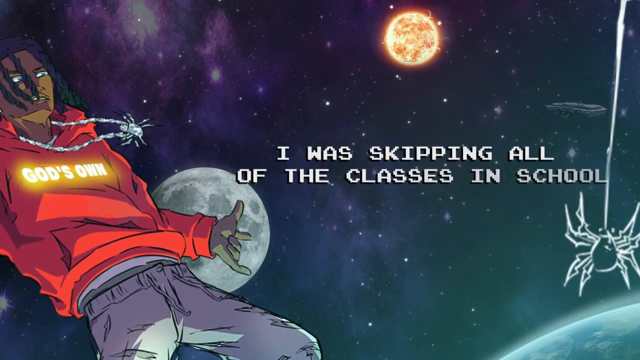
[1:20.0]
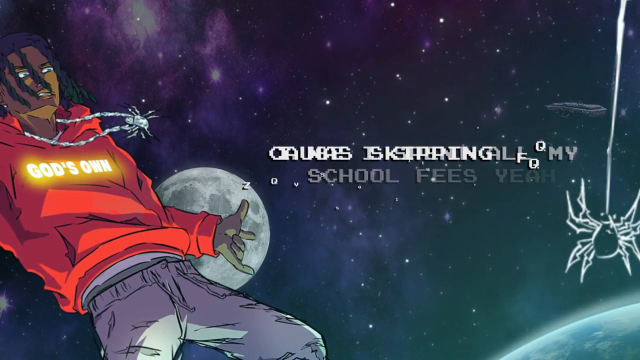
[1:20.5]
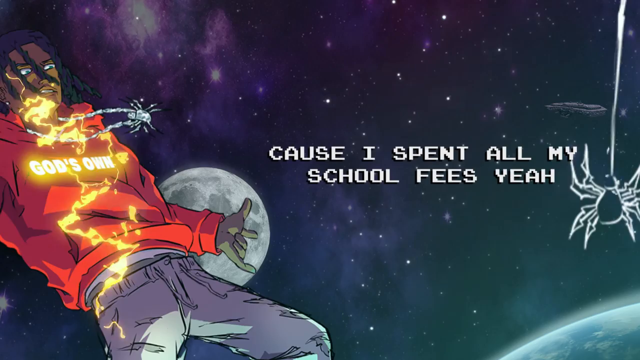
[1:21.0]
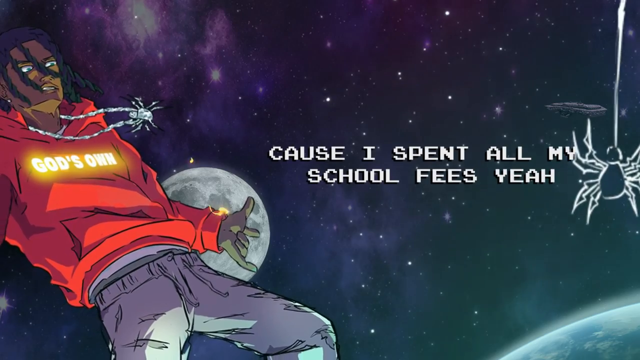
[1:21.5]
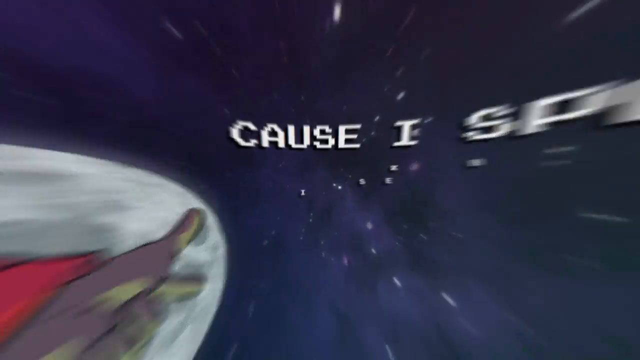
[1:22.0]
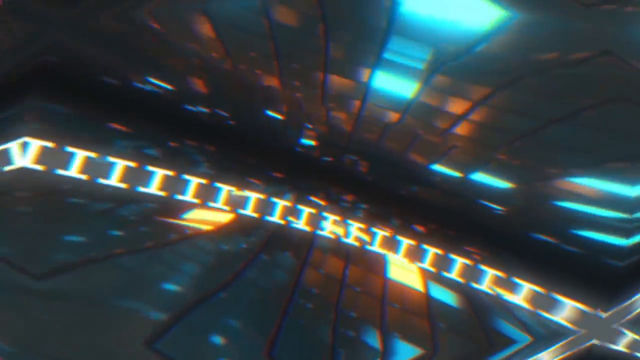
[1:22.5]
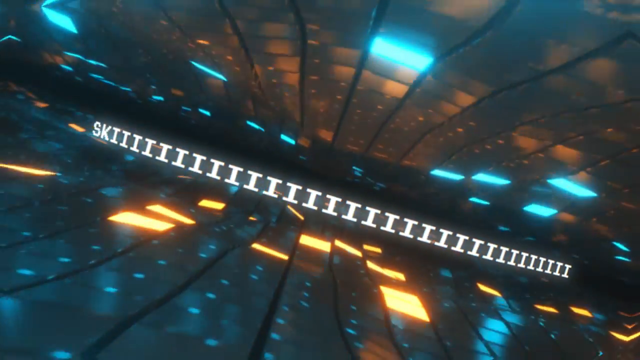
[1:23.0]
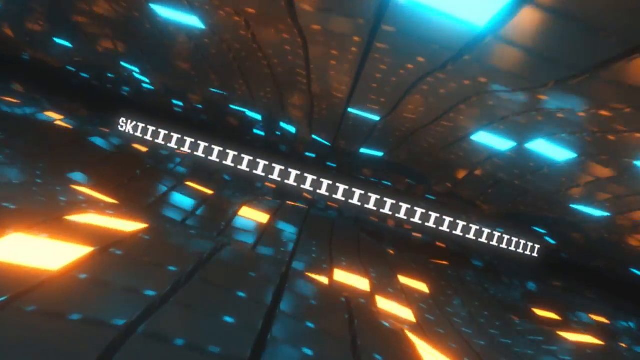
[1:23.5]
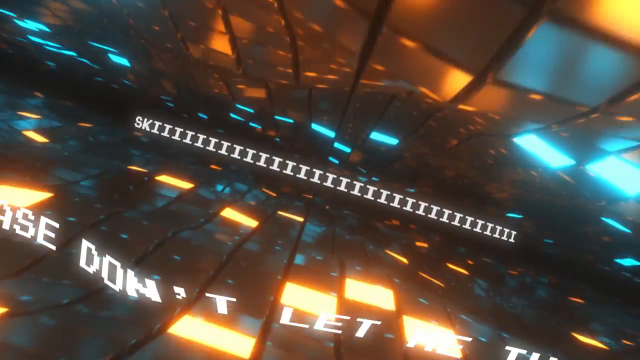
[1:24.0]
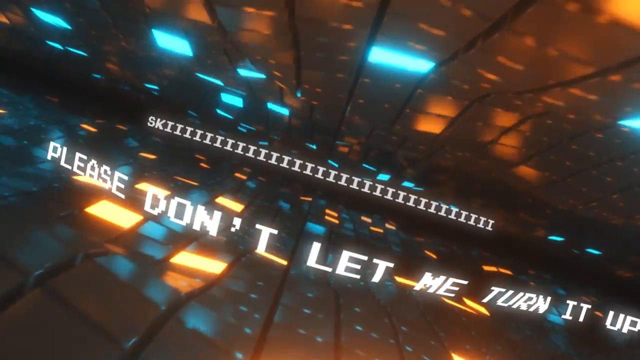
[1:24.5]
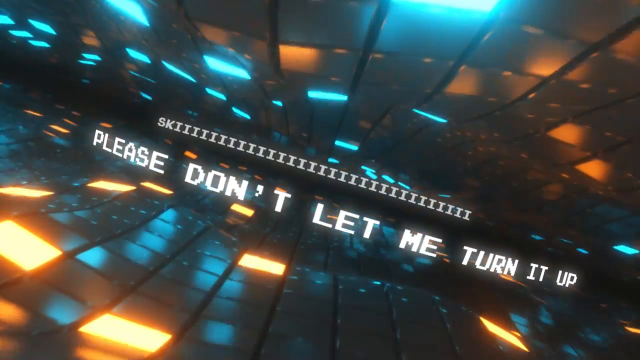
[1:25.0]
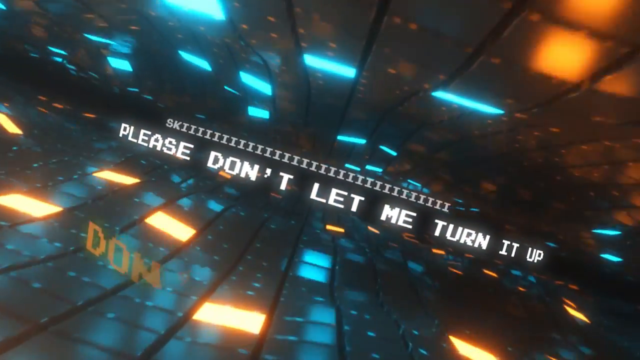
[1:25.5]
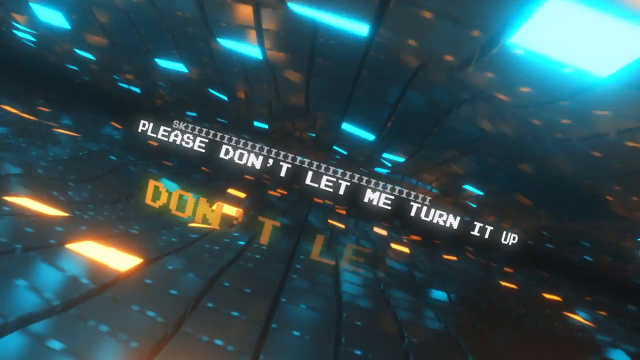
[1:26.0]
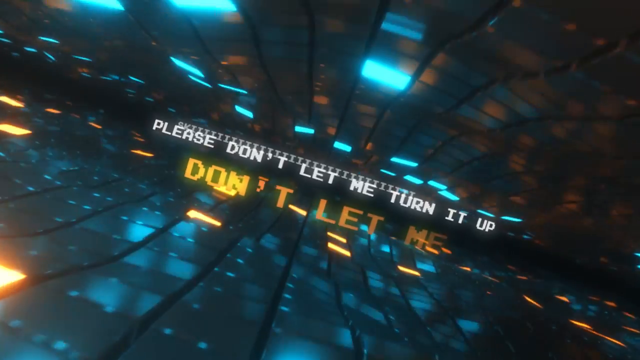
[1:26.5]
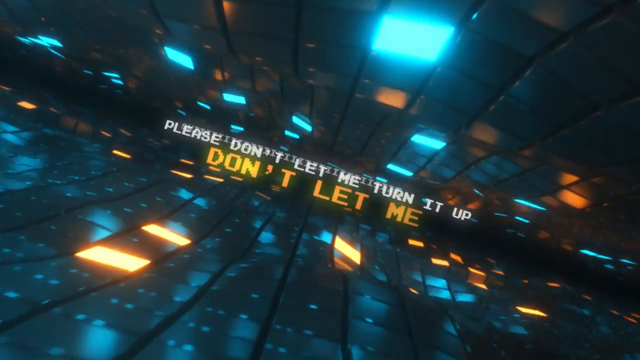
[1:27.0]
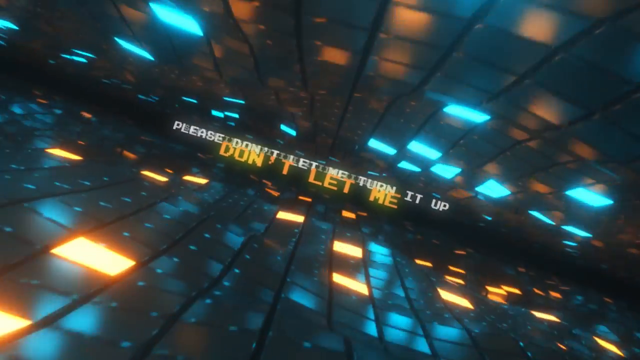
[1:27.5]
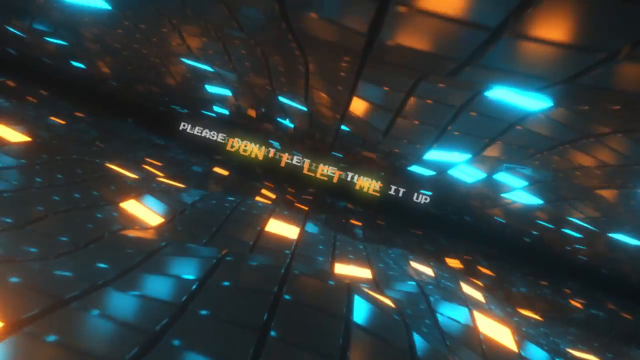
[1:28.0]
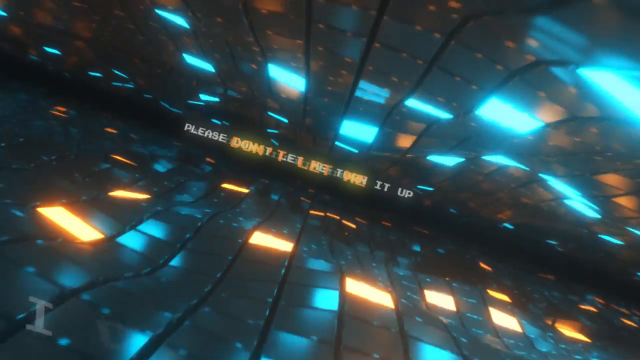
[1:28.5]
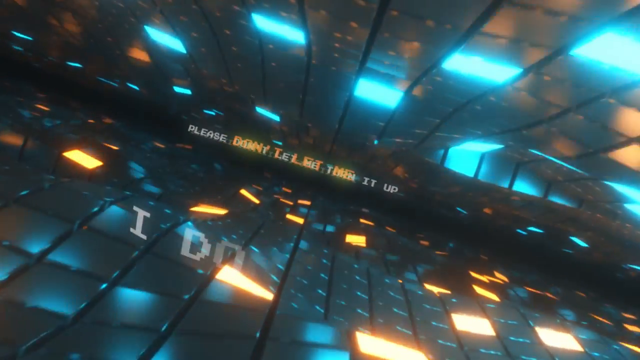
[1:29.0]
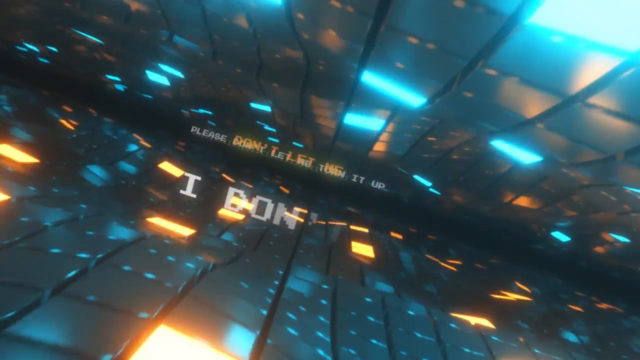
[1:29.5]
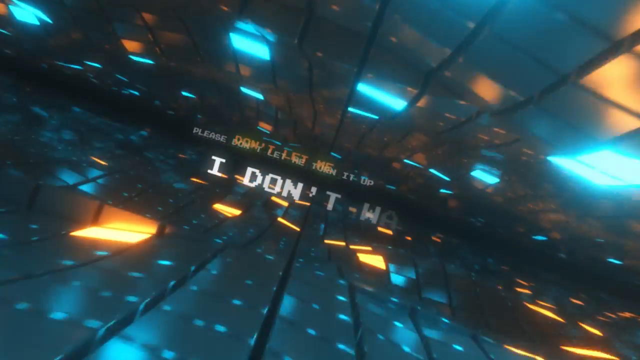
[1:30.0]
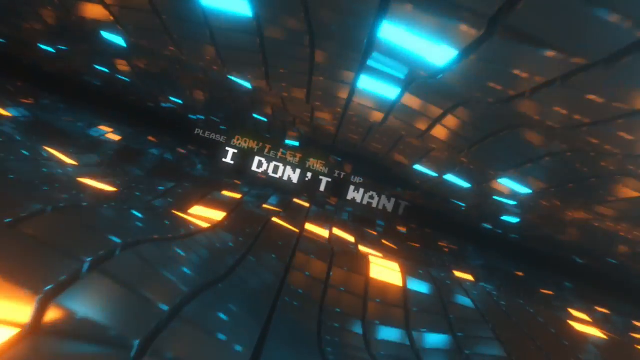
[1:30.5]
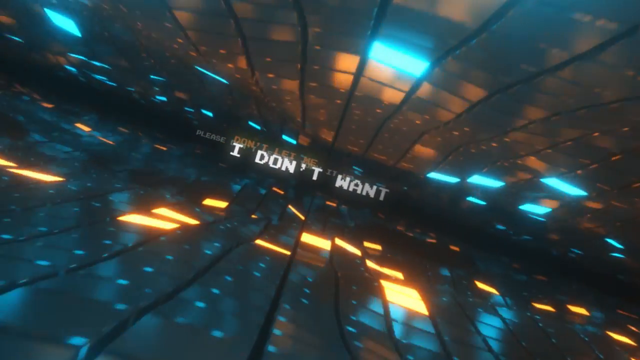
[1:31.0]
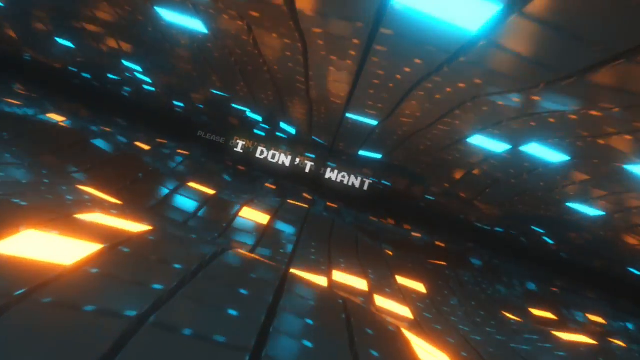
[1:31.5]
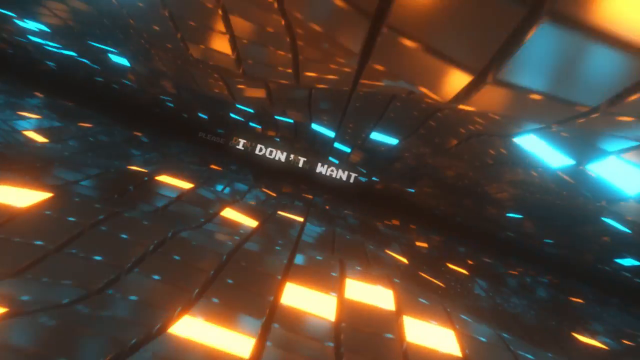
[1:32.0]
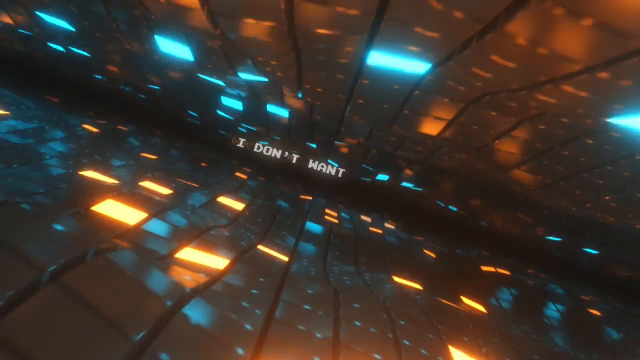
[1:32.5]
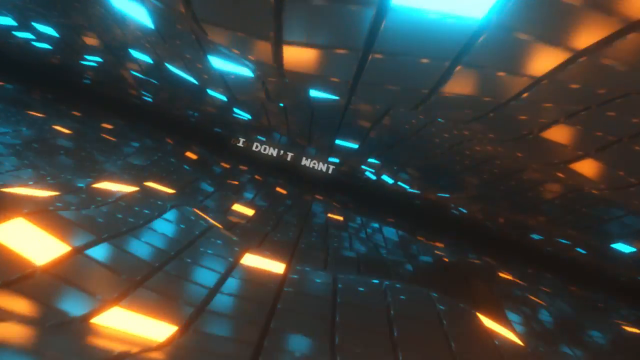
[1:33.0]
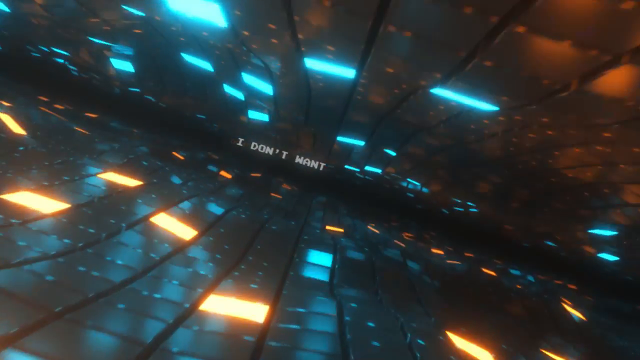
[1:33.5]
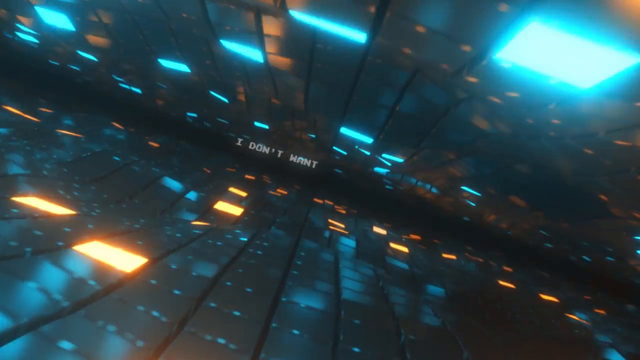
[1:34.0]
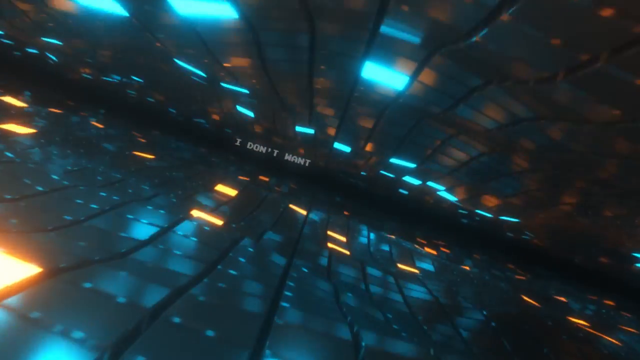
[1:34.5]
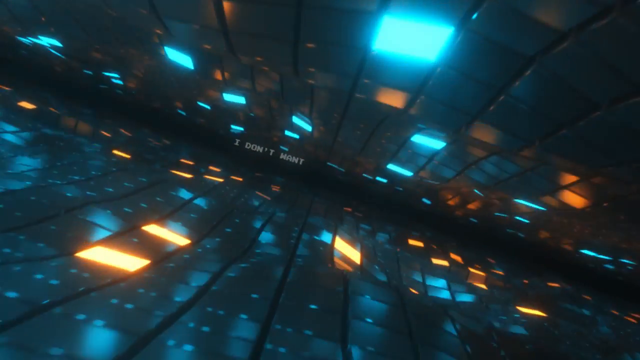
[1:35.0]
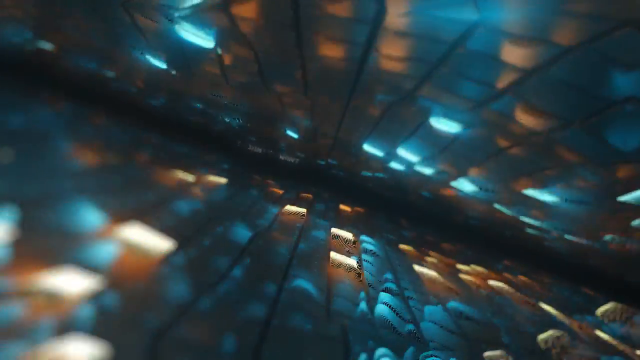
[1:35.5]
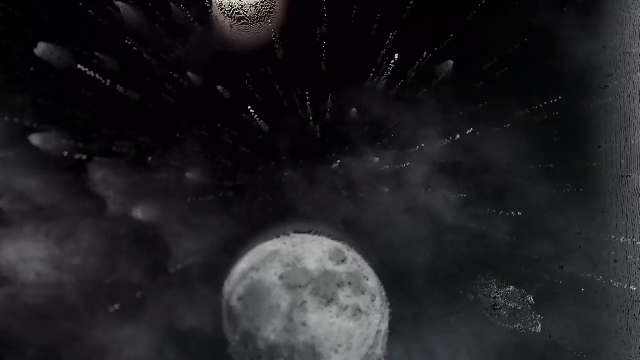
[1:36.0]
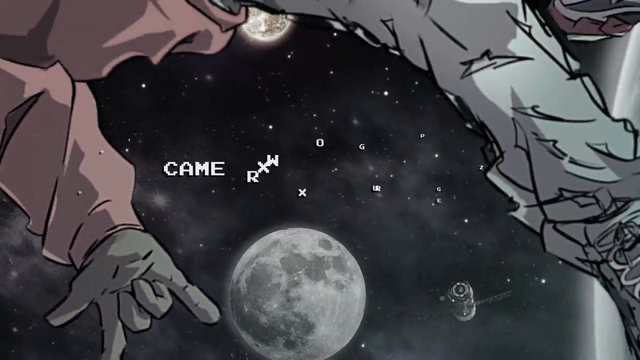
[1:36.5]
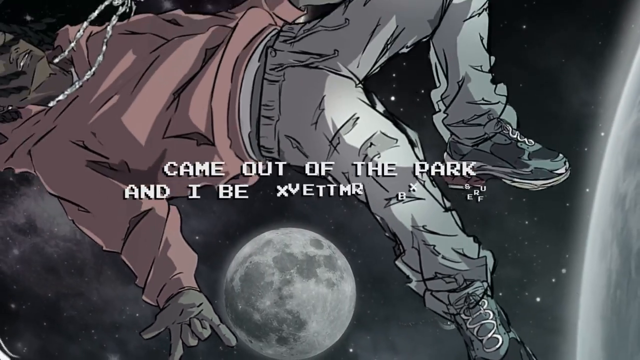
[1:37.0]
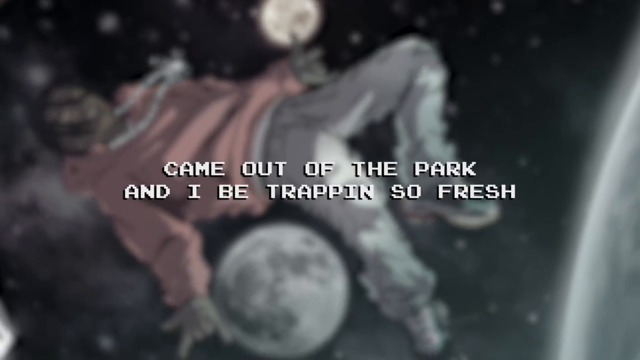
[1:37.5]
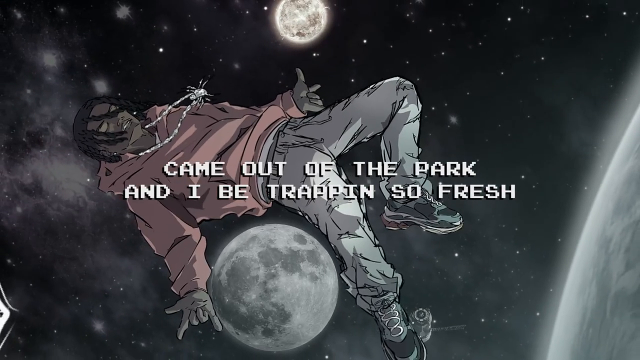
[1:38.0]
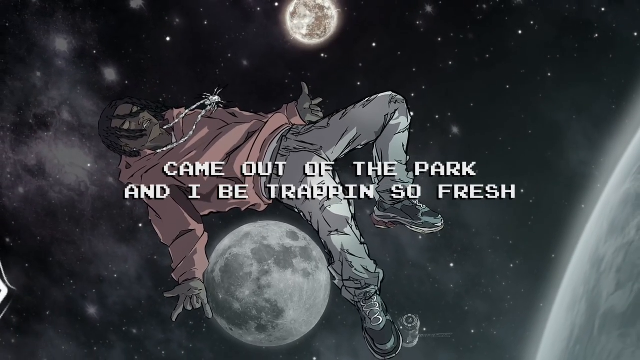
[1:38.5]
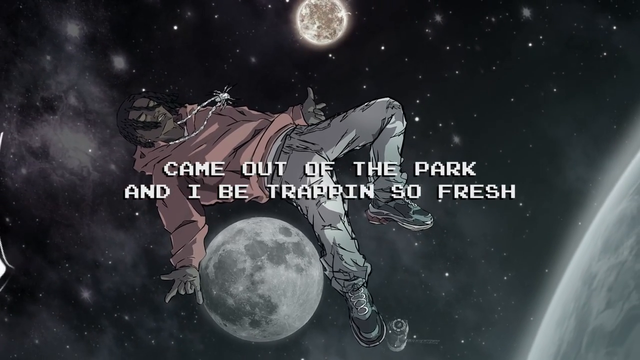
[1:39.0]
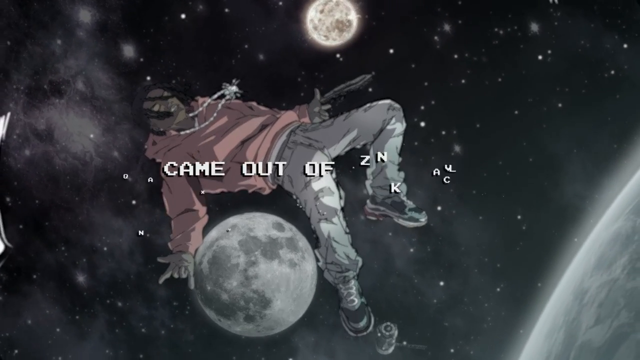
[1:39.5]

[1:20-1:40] In what appears to be an animated music video with lyrics, there is a very short glimpse of the same outer space setting, then a quick zoom into what looks like a more high-tech ceiling or floor of lights, possibly the inside of a computer or a simulation. The computer-simulated mirrored ceiling and floor have blue and orange lights, and the blocks of lights kind of come in waves. The text comes in at an angle in this wavy-lights scene. Then it blinks and the scene is back in space, but desaturated, with colors muted and not as bright as before. Lyrics are visible throughout, overlaid on the animated scenes. The character maybe has an anime style; it is not very realistic and has a cartoon, animated look.